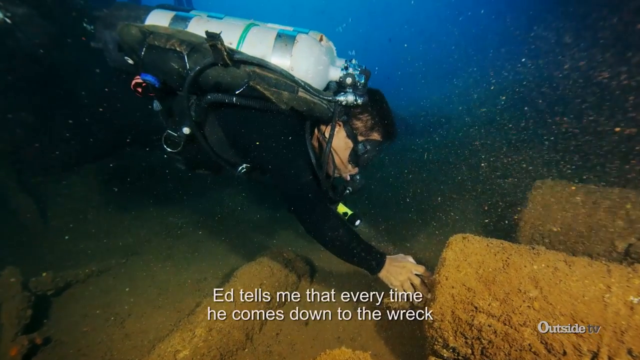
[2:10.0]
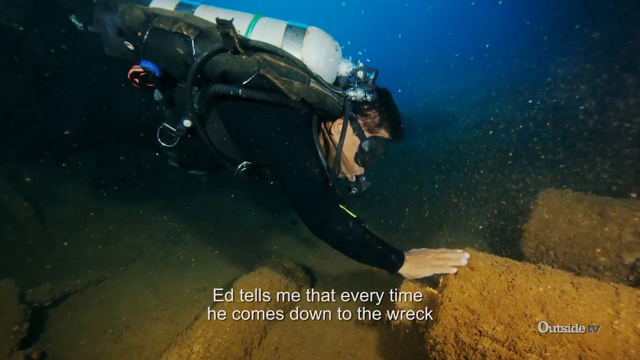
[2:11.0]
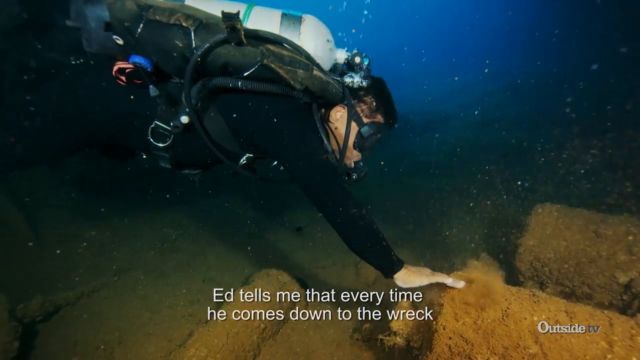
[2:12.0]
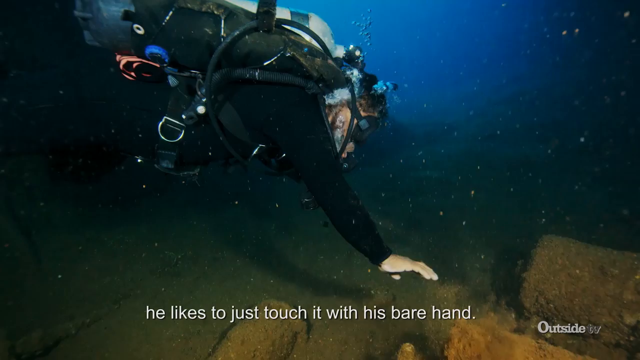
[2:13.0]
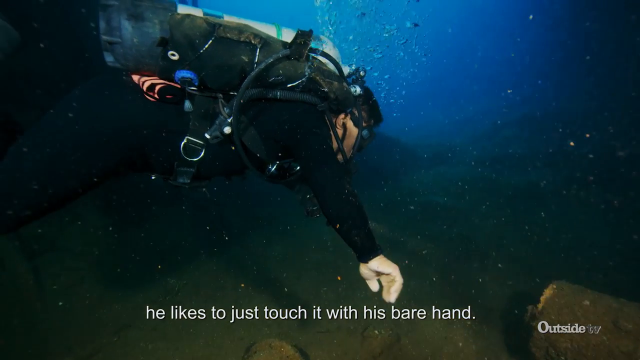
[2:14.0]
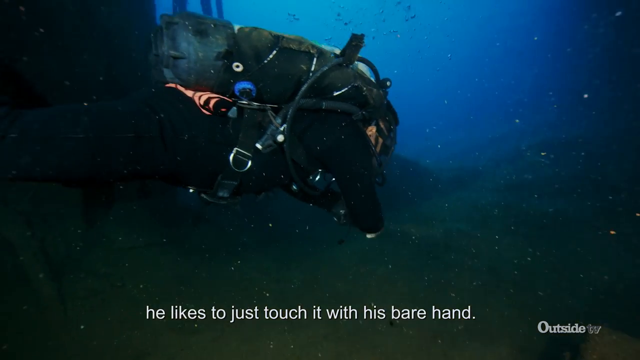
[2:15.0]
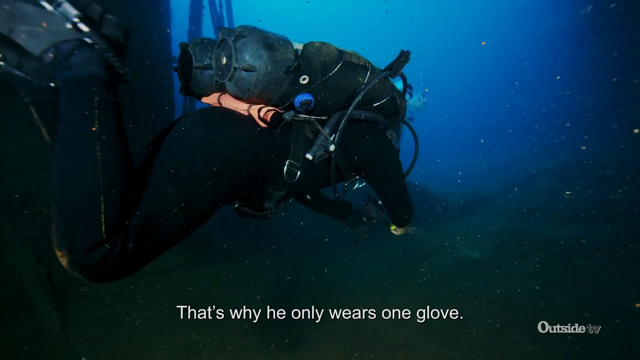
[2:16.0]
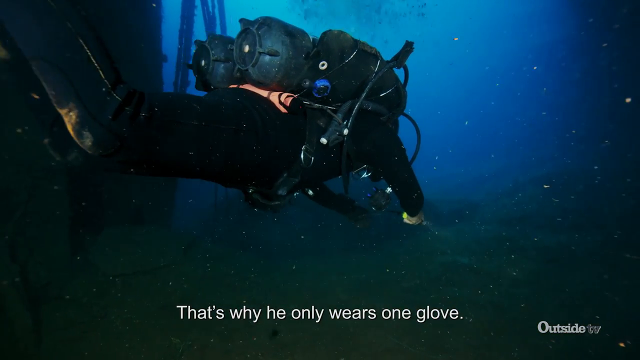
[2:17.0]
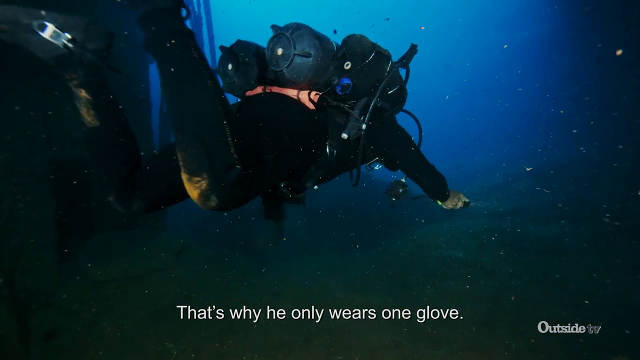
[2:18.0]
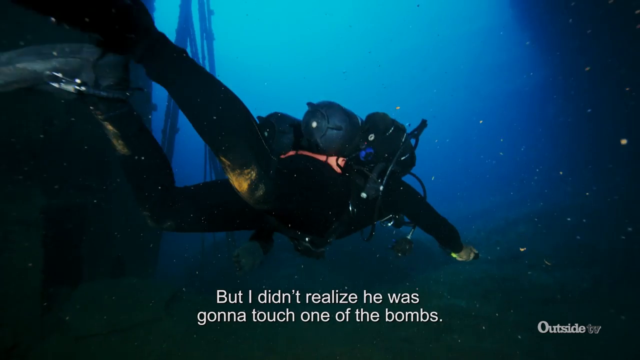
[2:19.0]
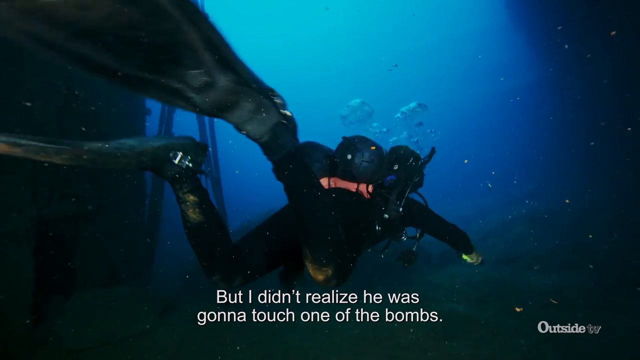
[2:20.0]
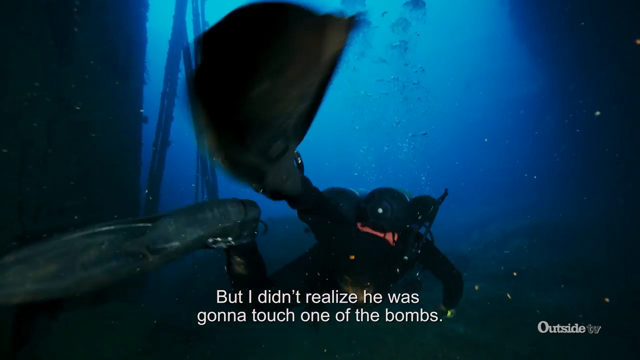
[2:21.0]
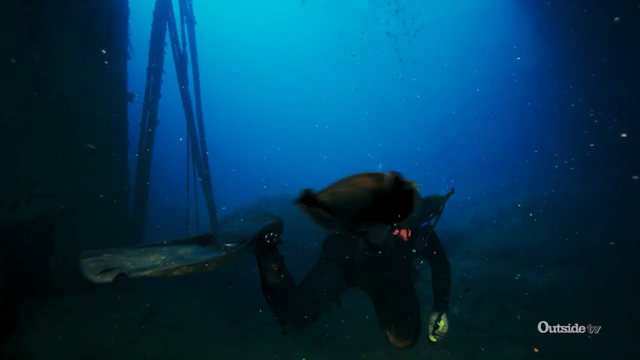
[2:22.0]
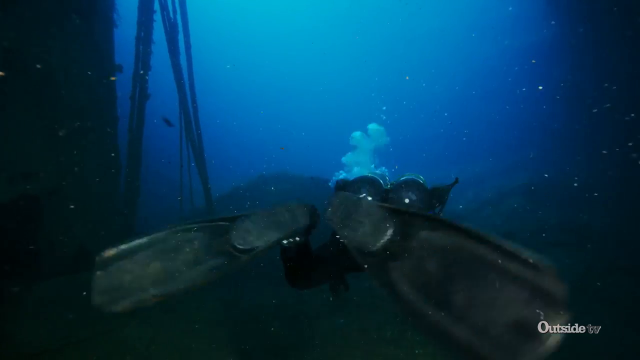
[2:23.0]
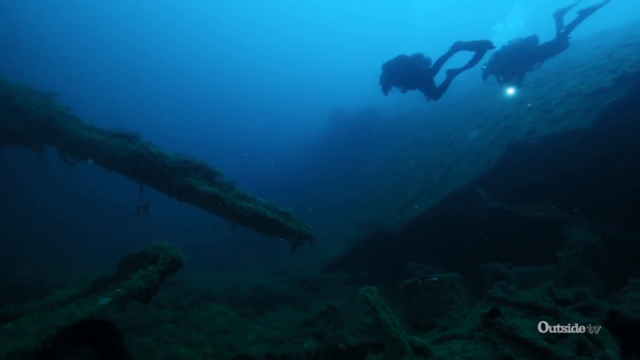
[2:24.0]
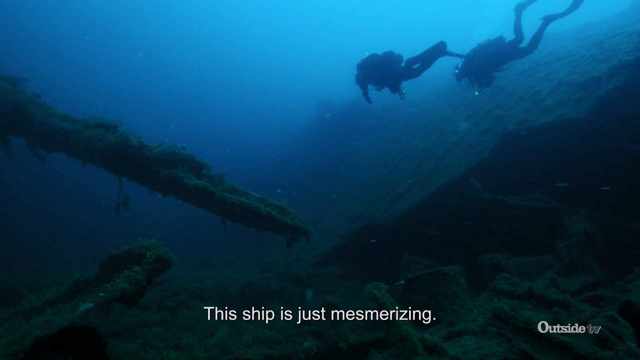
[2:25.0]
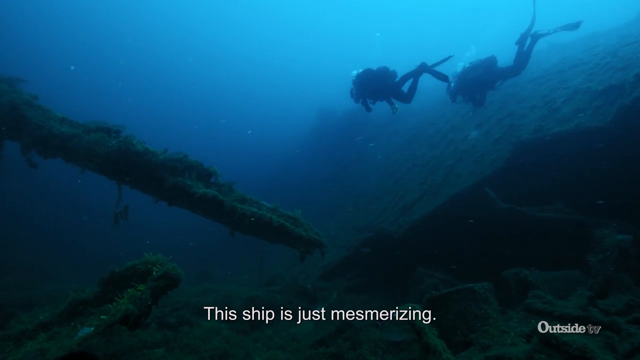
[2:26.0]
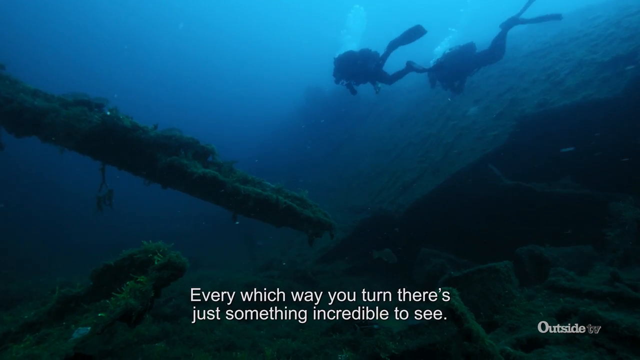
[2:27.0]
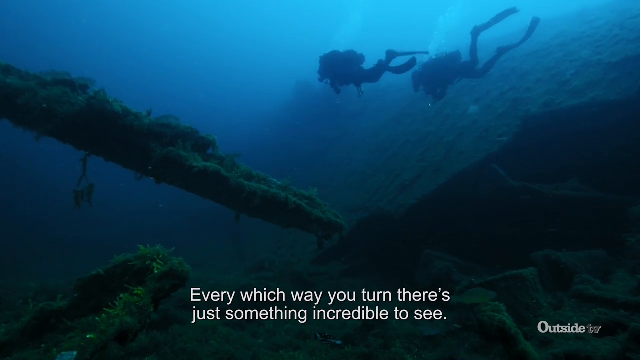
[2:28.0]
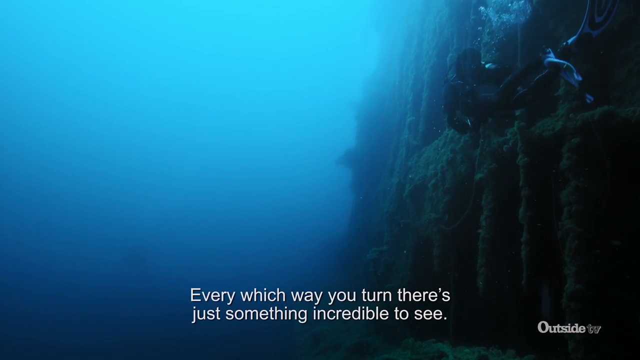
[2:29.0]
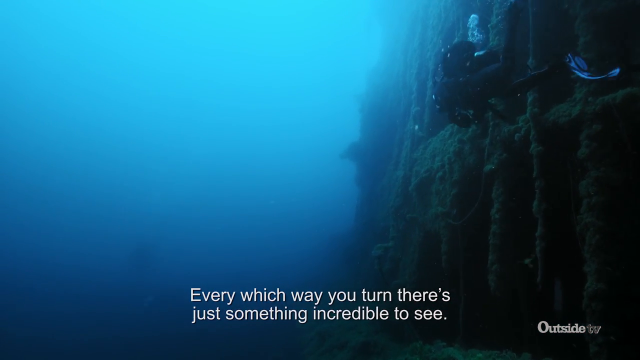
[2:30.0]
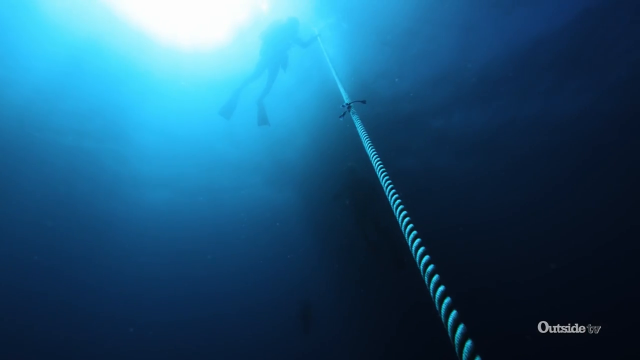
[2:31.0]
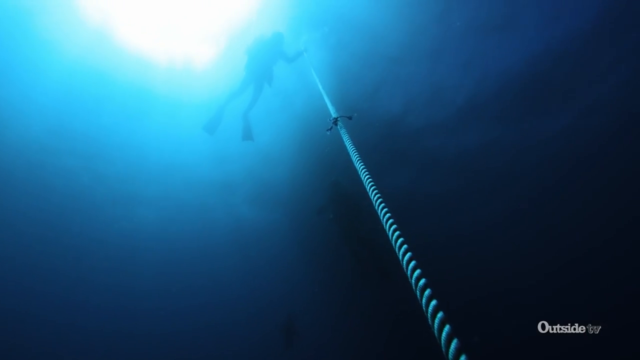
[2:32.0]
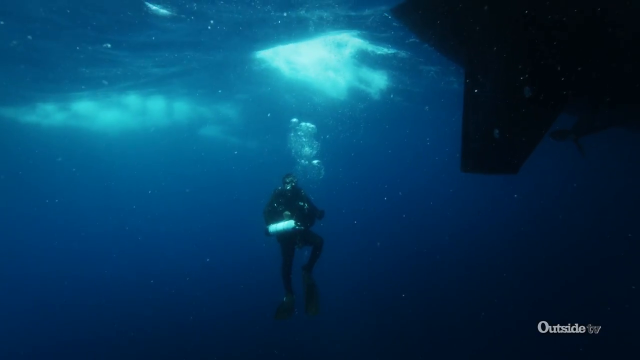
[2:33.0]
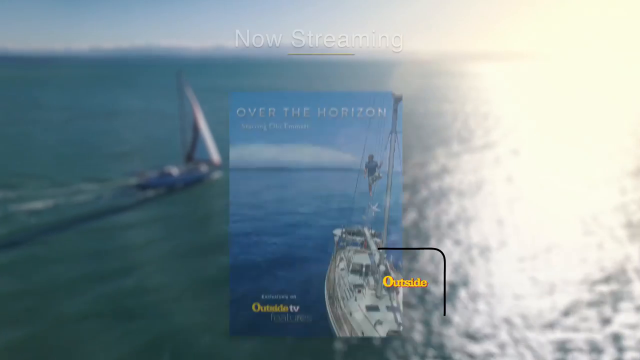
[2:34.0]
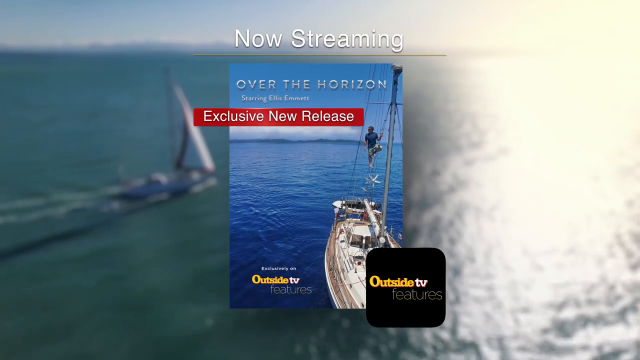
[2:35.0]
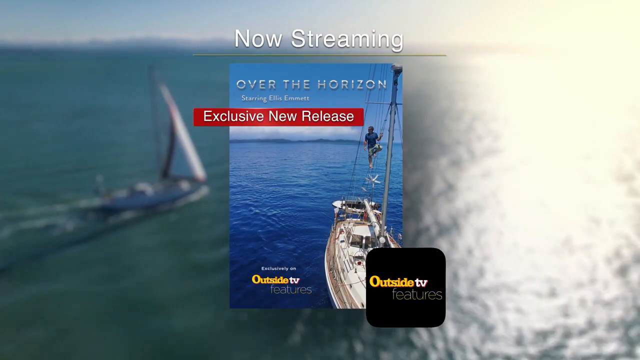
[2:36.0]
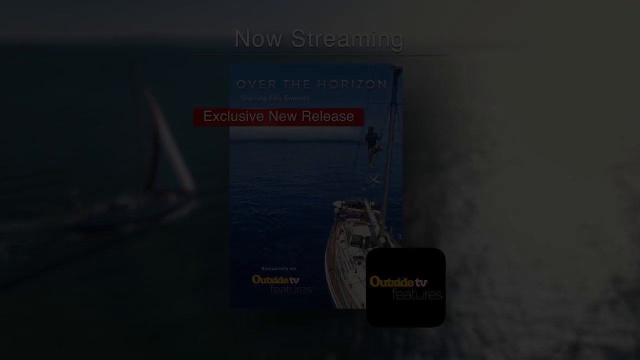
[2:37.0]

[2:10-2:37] Underwater, a man with two white oxygen tanks on his back uses his right hand to touch an object, with white text at the bottom reading "Ed tells me that every time he comes down to the wreck he likes to just touch it with his bare hand." The man swims away from the item, and the text changes to "That's why he only wears one glove. But I didn't realize he was gonna touch one of the bombs." Two scuba divers, barely silhouettes against the water, swim past the wreck, with white text at the bottom reading "This ship is just mesmerizing. Every which way you turn, there's just something incredible to see." One of the divers is shown beside the wall of the ship, demonstrating the scale, followed by a rope leading up to the surface with a scuba diver at the top. The shot cuts to a scuba diver just below the surface near the bottom of a boat on the water, then to a blurred background of a boat on the water. A graphic appears in front stating "Now Streaming" and the title "Over the Horizon", identified as an "Exclusive New Release", with a logo for Outside TV.